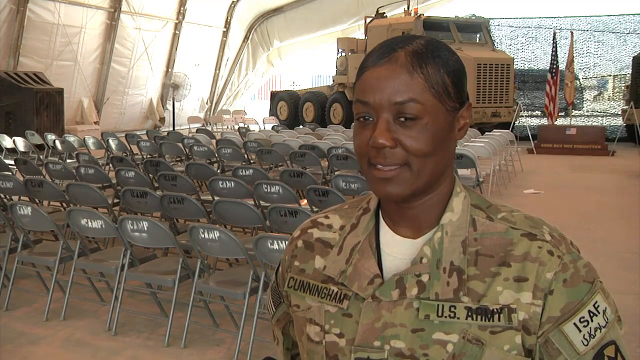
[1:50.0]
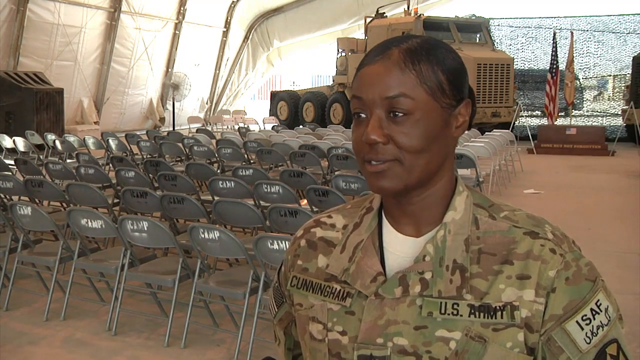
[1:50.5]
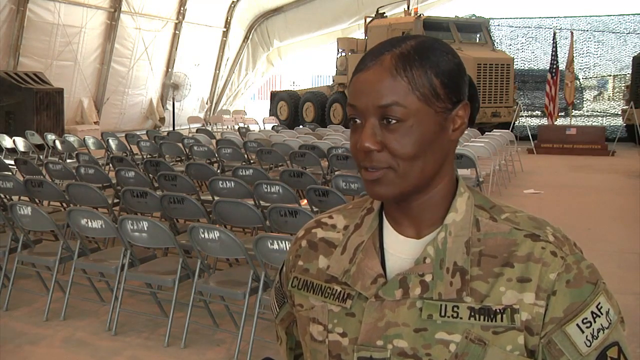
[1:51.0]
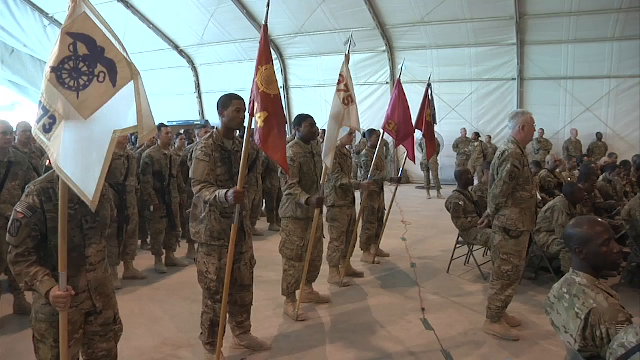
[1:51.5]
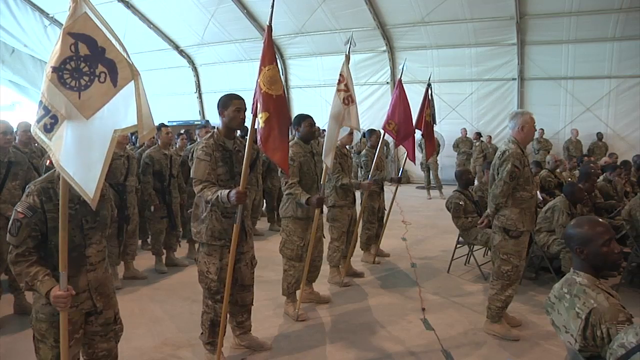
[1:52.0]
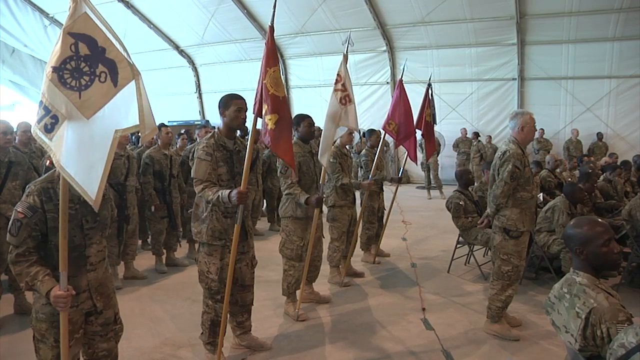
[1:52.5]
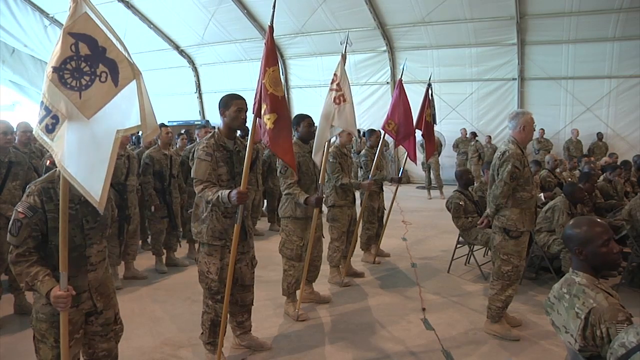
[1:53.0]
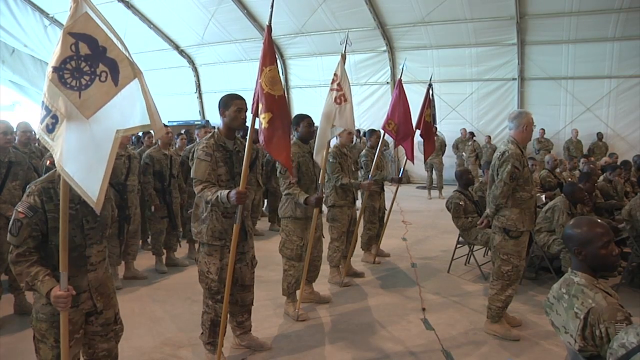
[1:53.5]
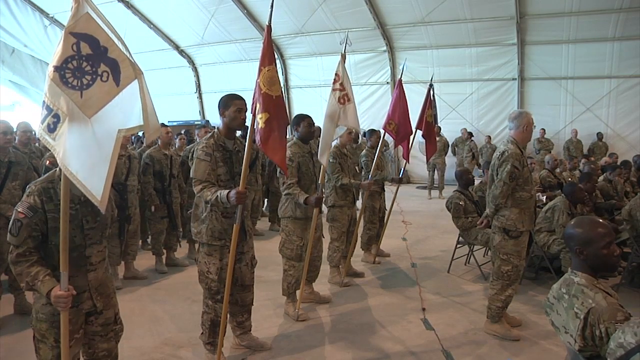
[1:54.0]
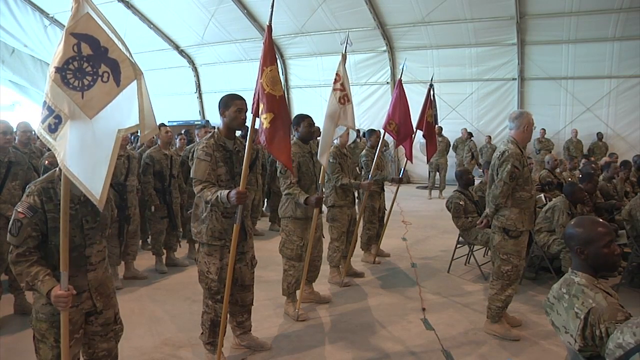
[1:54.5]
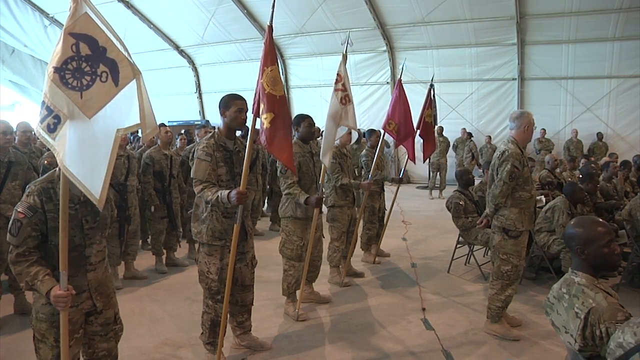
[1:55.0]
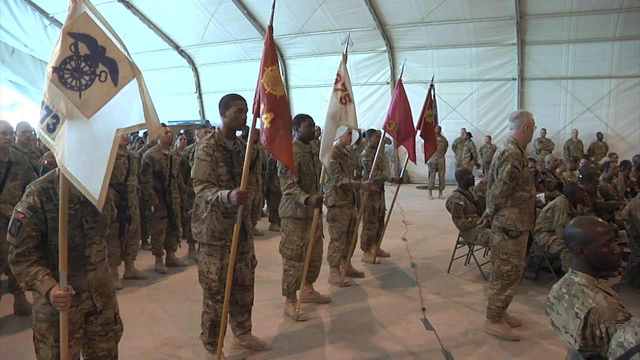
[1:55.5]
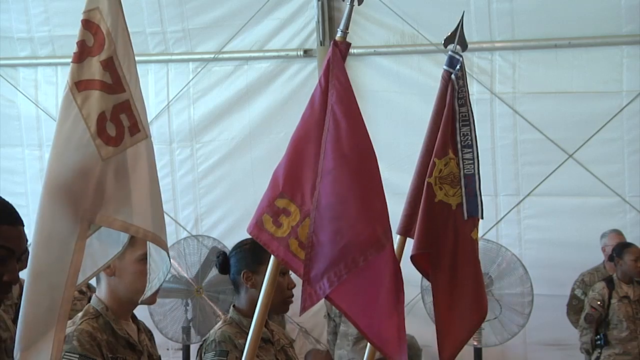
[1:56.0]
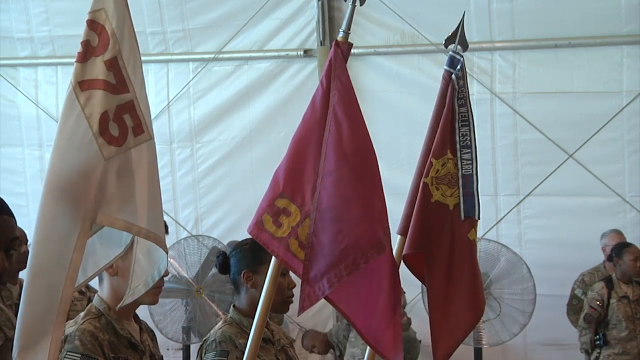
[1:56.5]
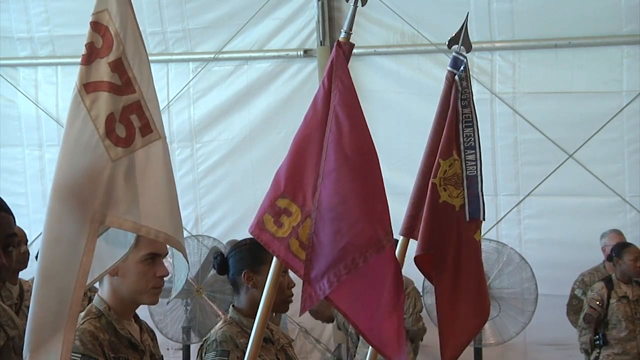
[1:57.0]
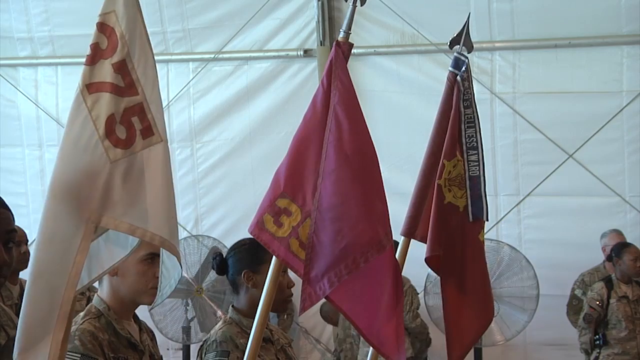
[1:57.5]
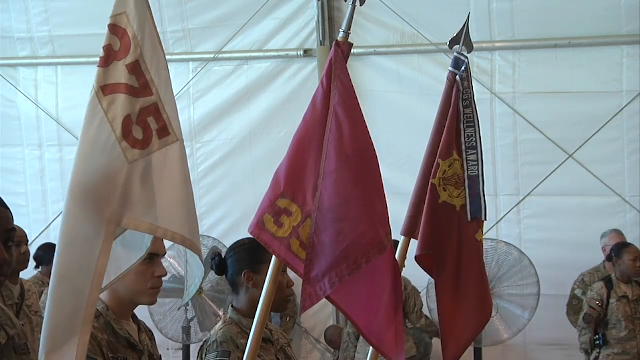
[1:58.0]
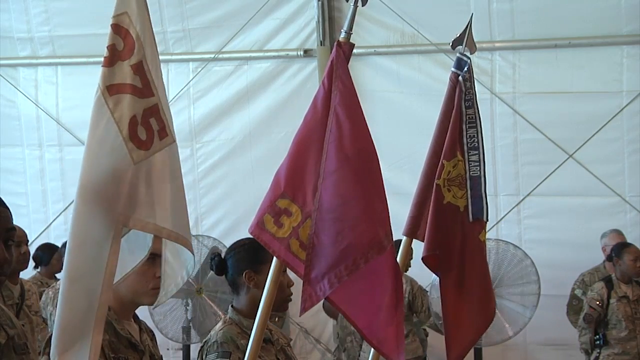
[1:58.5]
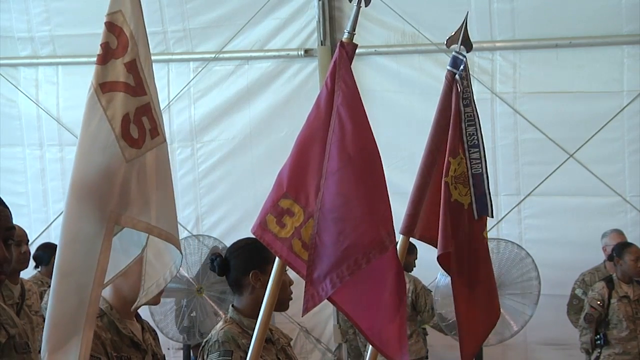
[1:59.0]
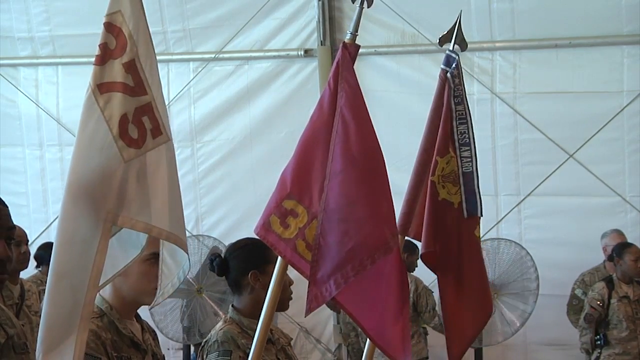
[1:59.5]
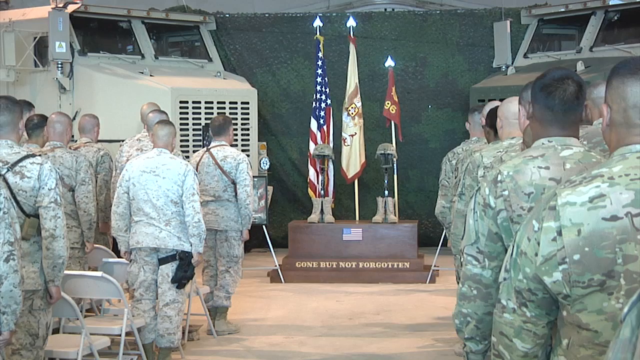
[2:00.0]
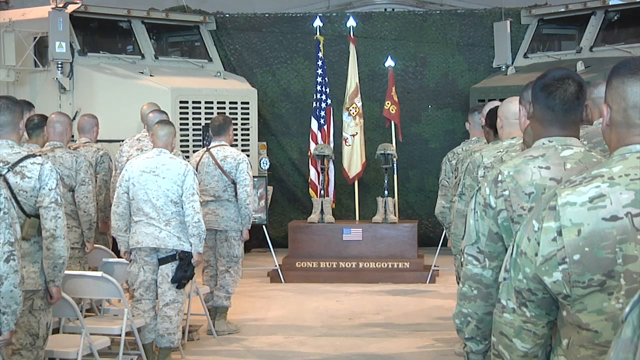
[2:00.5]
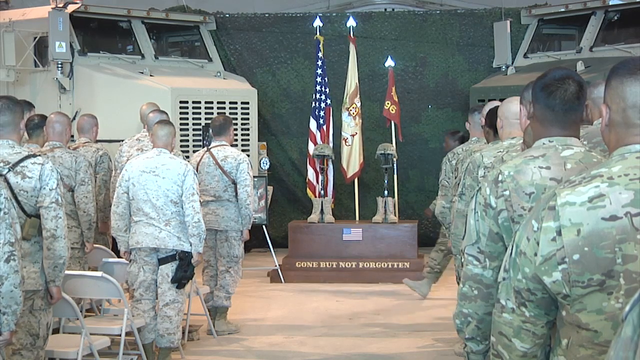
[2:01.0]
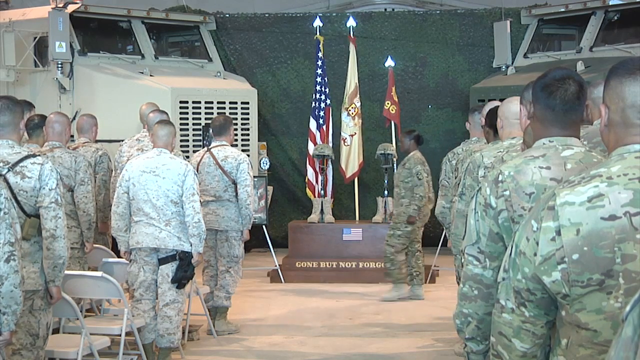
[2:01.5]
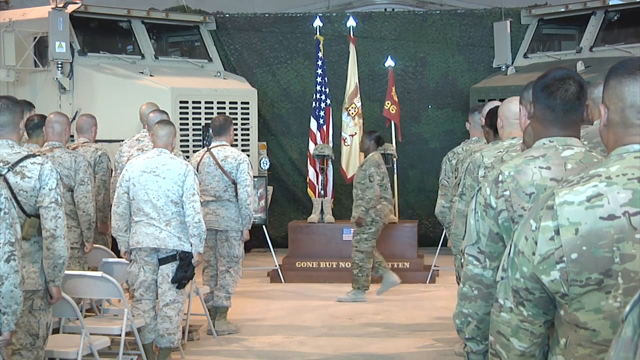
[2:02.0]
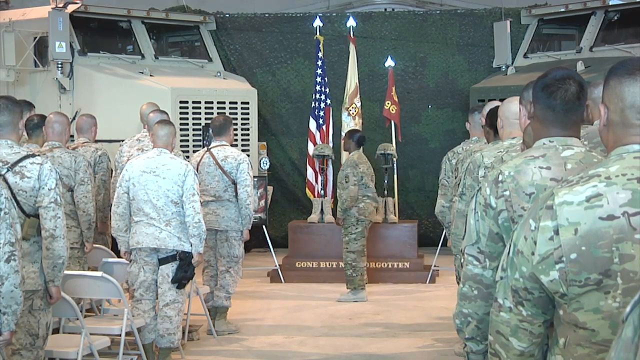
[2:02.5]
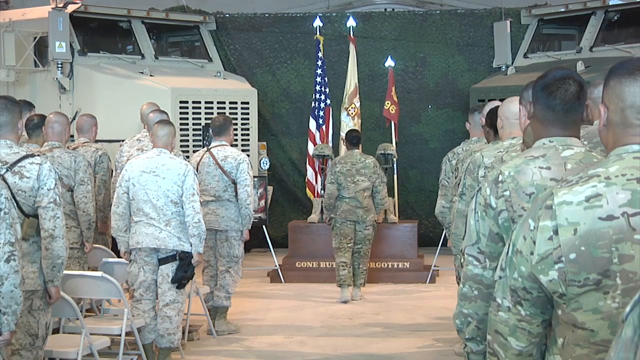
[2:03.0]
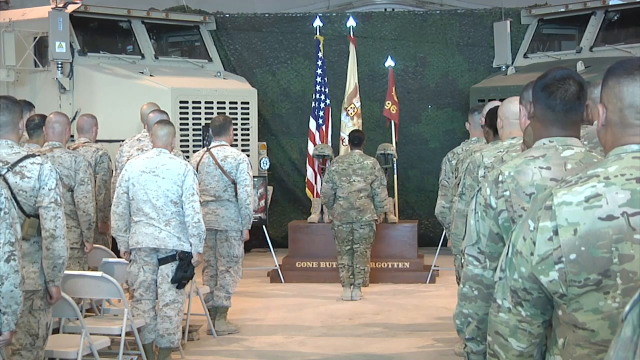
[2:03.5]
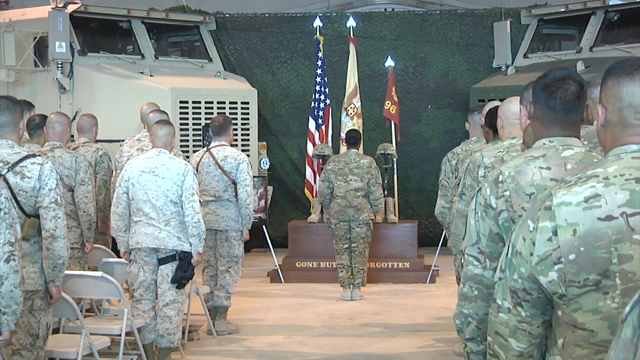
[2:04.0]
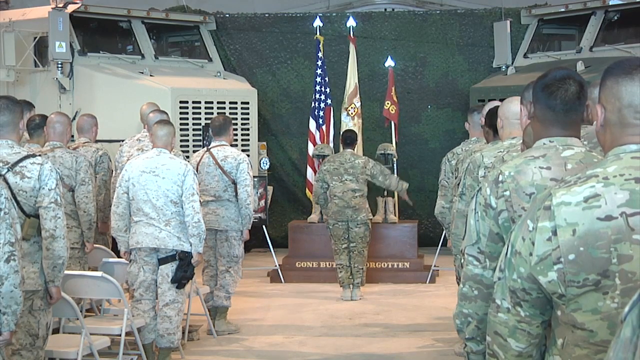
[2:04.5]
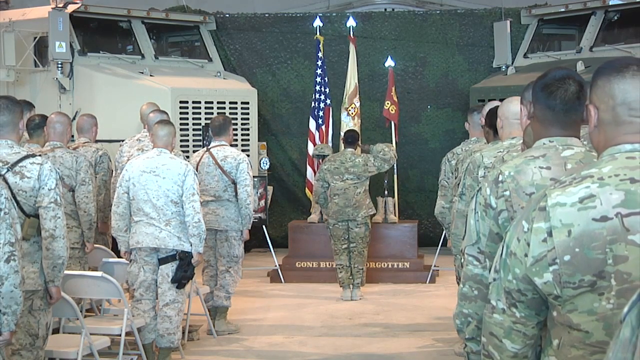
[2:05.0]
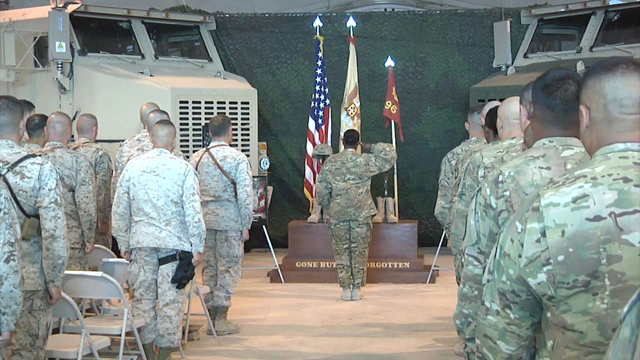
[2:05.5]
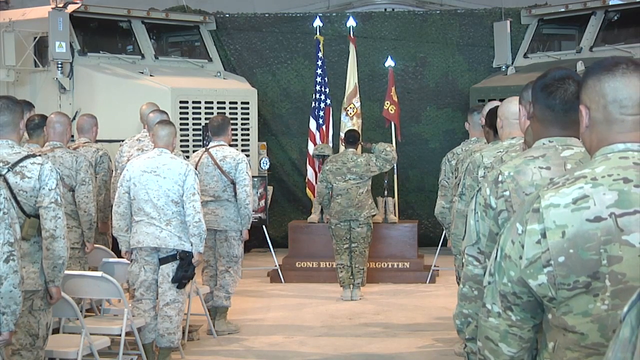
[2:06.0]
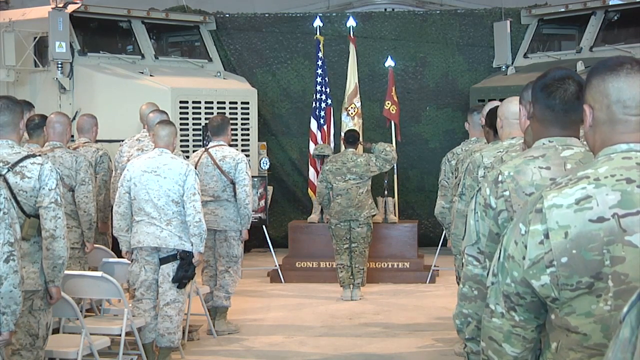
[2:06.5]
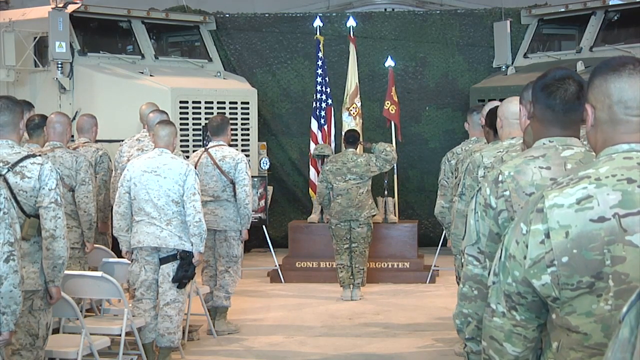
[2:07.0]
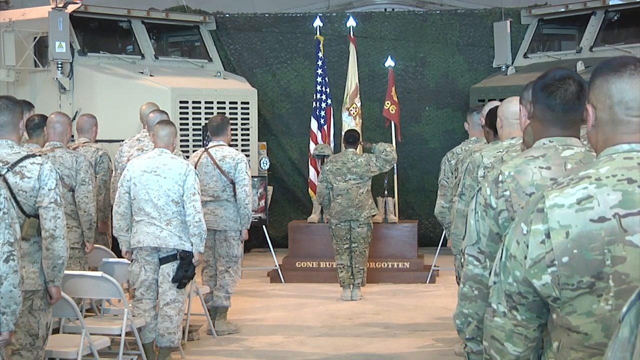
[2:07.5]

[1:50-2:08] Everybody in the video, unless otherwise noted, wears a camouflage uniform. Four people face the right of the screen, seen in profile, standing shoulder to shoulder with about two feet between each of them, each holding a flag in their right hand. The flags move as if in a very slight breeze. A close-up of the flags follows: the one on the left is white, the middle pink and the one on the right maroon. The white one has red numbers "375," and the pink one shows a gold "35," with the rest hidden by the folds; nothing distinct is visible on the maroon one as they keep waving. Then three flags are in the center, an American flag on the left and two other unidentified flags. An aisle goes down the center to the flags, with the backs of military people visible on either side, and beside the flag to its left is a big military vehicle. A Black man walks in front of the audience from the right of the screen, turns to face the flags and salutes them with his right hand.